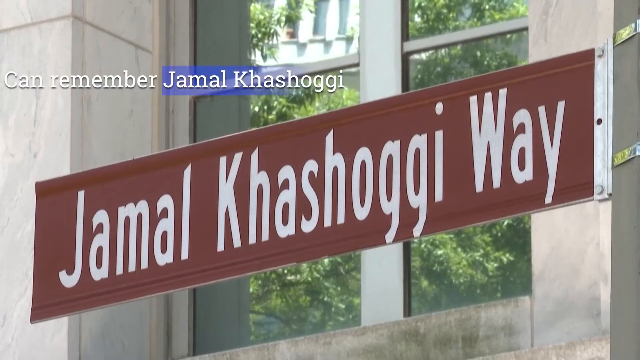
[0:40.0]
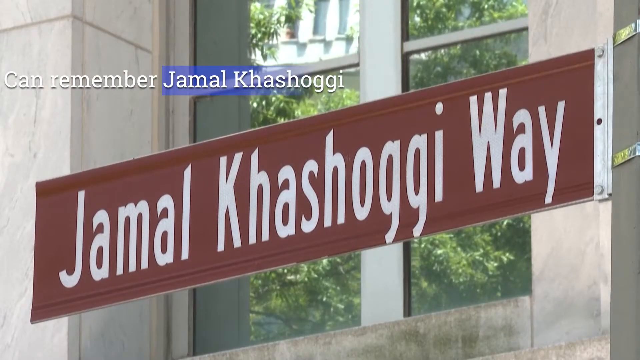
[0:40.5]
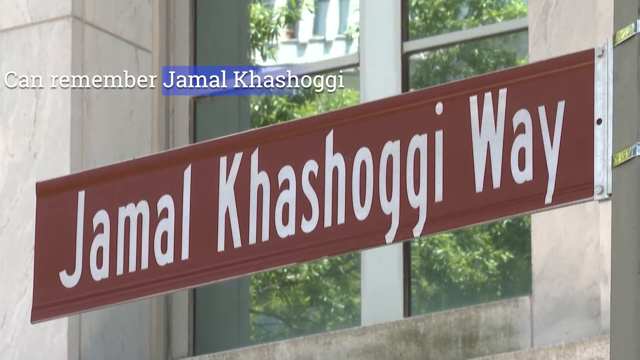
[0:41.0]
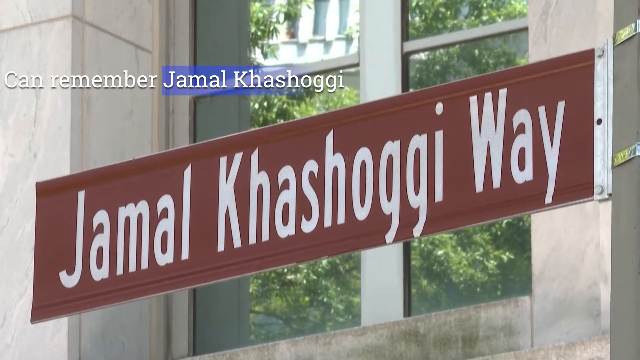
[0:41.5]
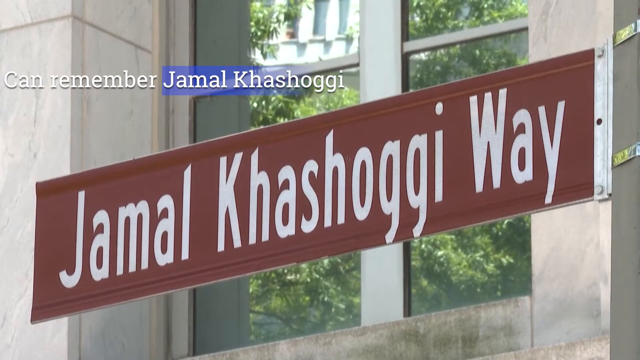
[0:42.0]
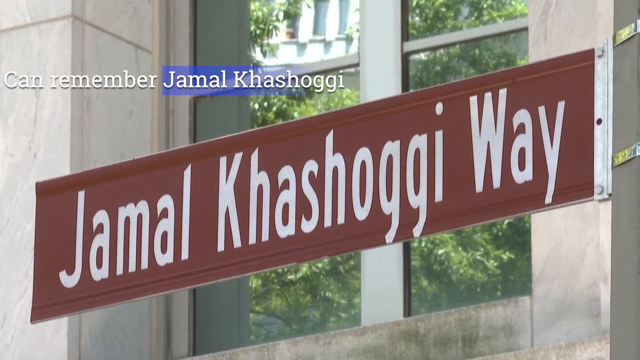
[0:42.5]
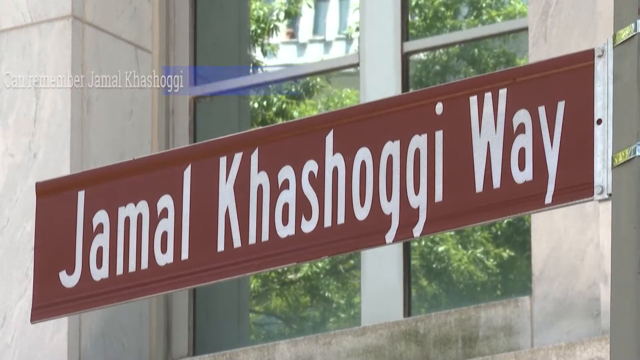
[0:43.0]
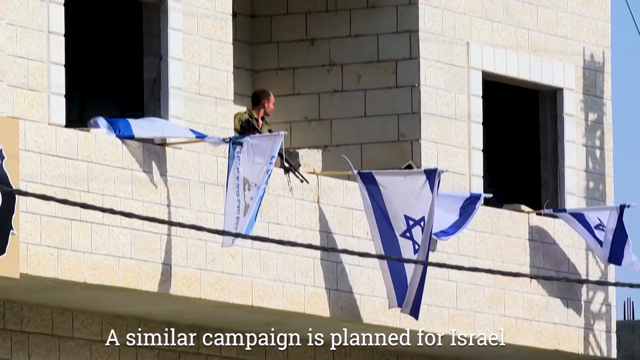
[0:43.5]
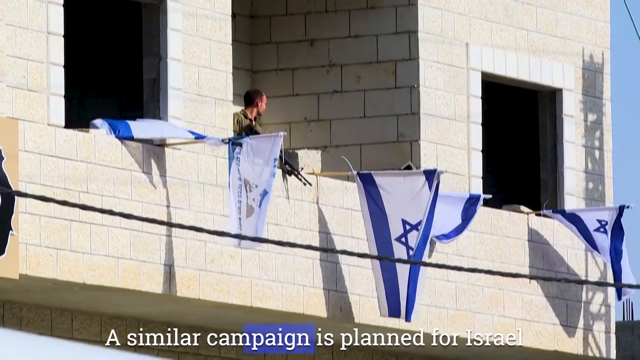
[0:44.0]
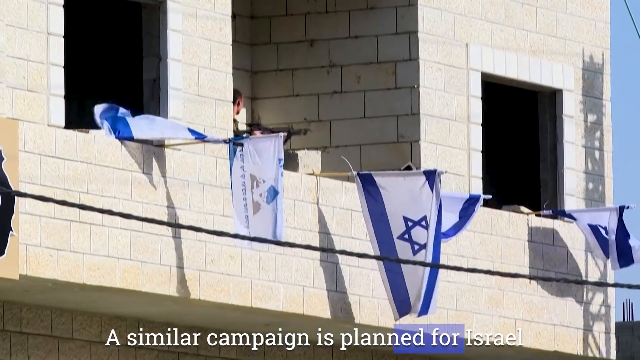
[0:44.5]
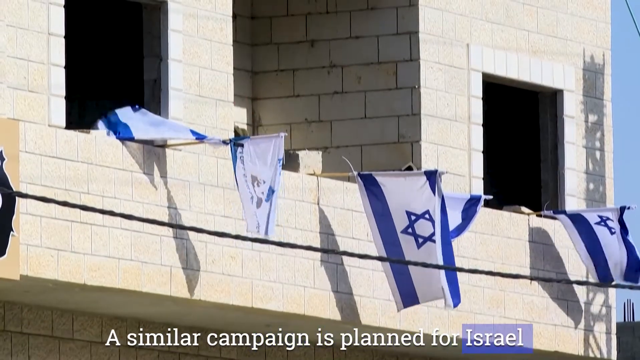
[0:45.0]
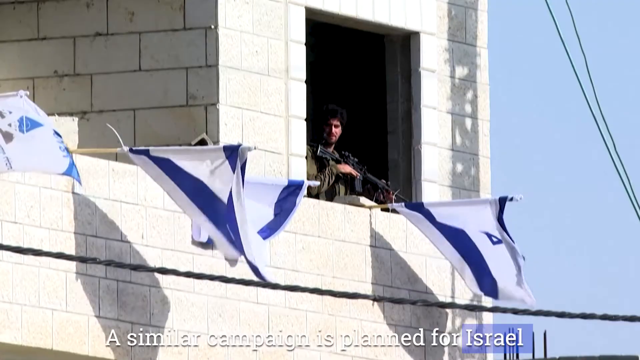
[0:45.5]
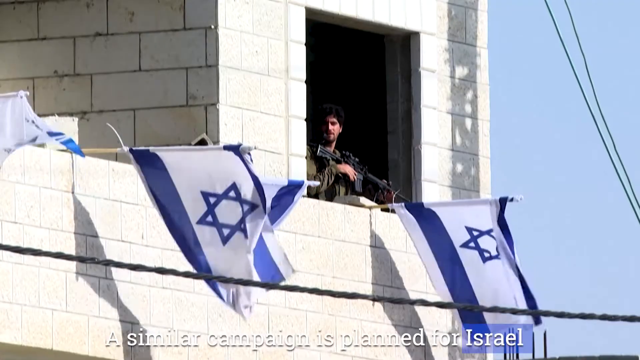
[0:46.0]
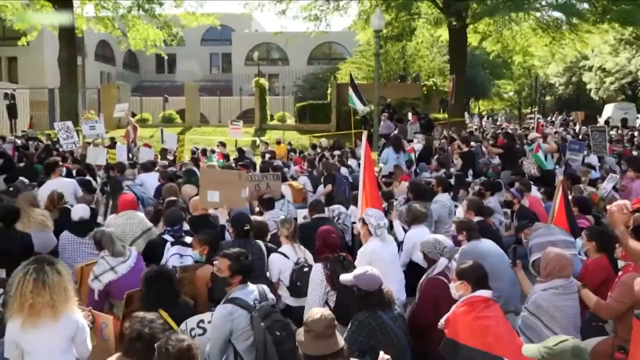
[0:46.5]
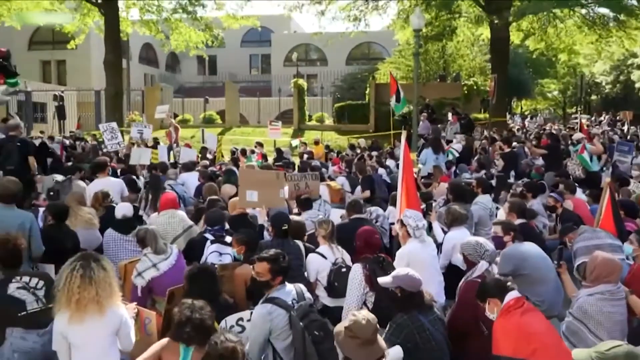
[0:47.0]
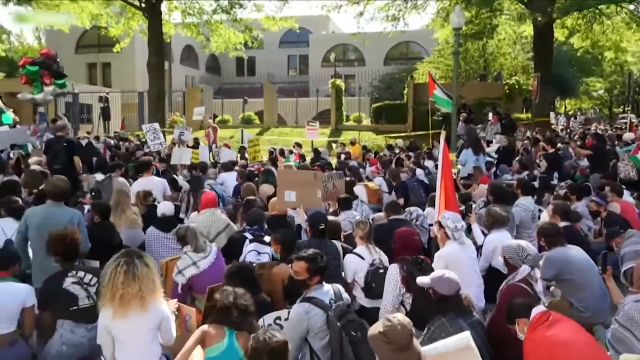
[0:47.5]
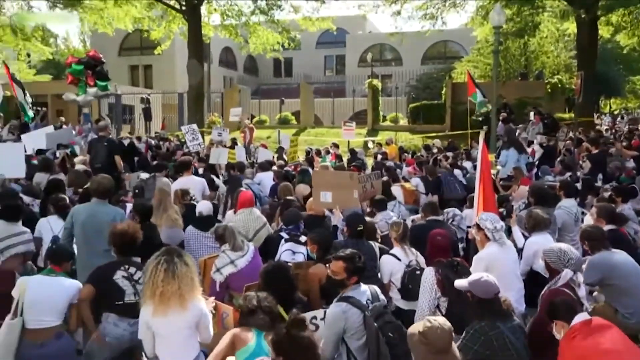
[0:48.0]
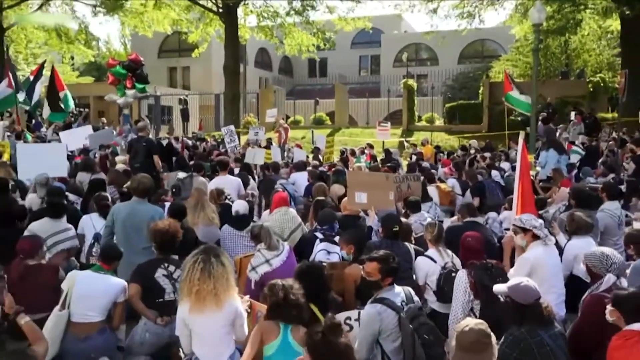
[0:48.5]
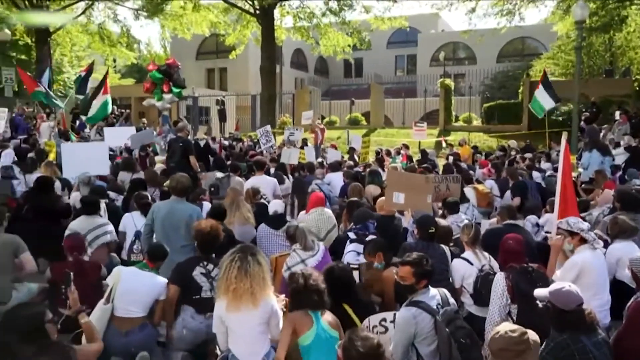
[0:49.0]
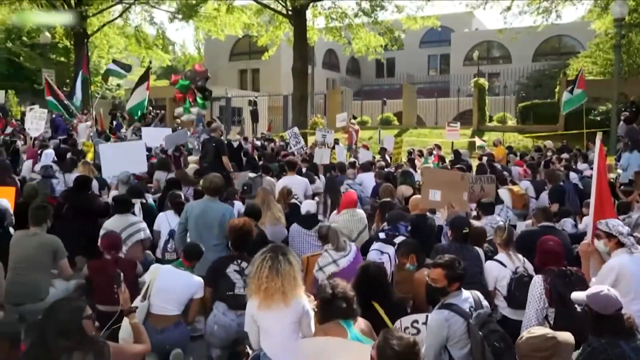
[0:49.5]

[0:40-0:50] A close-up shows a brown street sign reading "Jamal Khashoggi Way", similar to the sign seen earlier, with text mentioning "remember Jamal Khashoggi". Green trees wave in the breeze behind the sign. Then people hang from a balcony of a building holding Israeli flags, and next to the Israeli flags is a soldier holding an automatic weapon. Backing off from the building, the view shows a crowd of at least hundreds of people holding flags, dressed in colorful prints, and holding many banners.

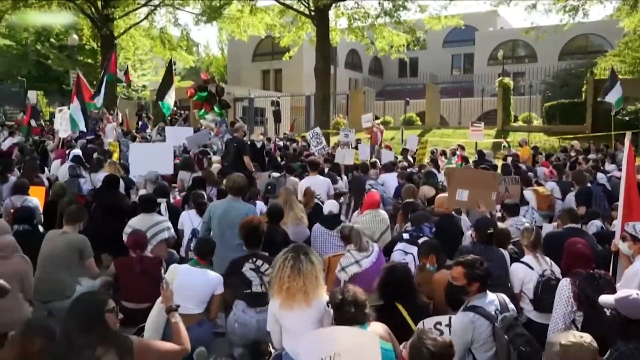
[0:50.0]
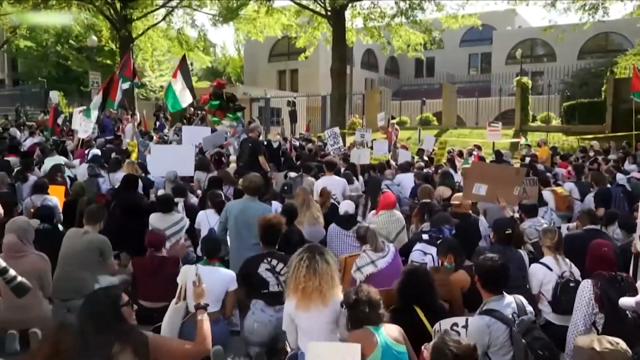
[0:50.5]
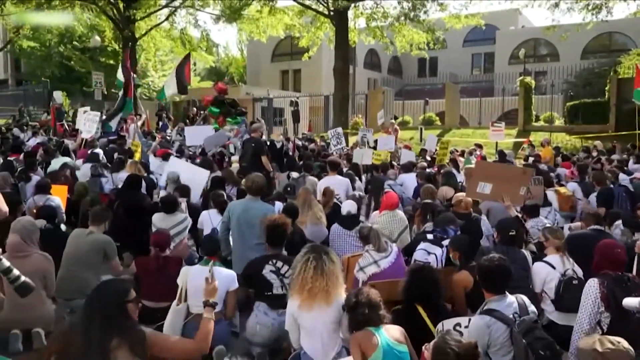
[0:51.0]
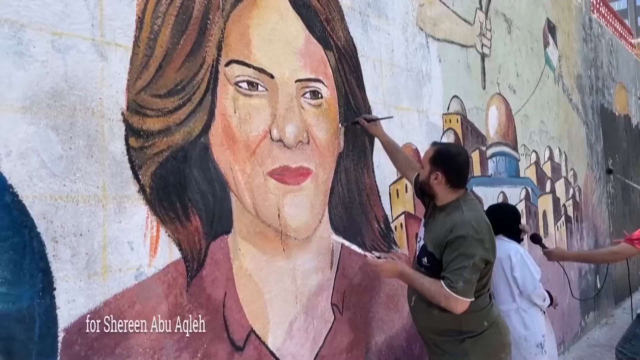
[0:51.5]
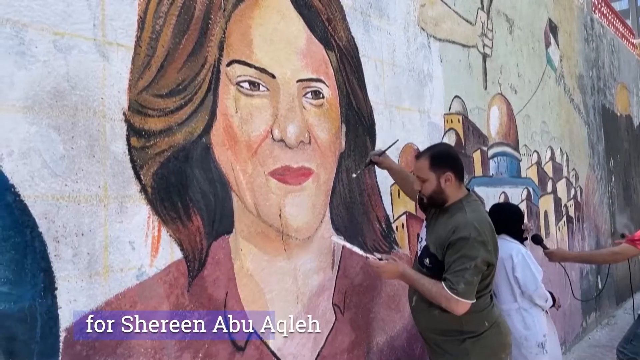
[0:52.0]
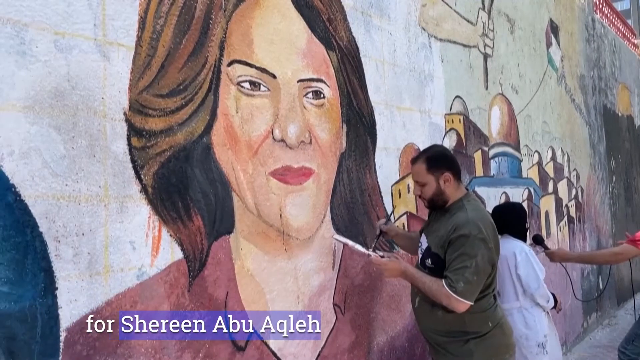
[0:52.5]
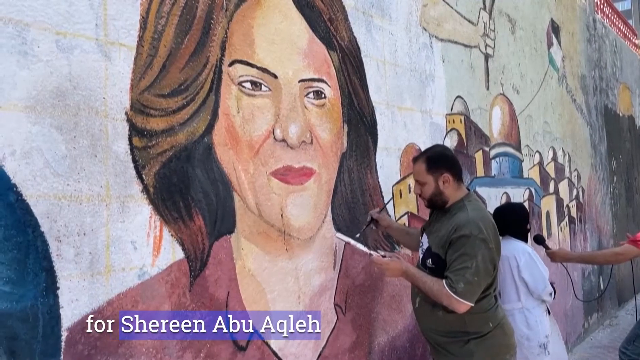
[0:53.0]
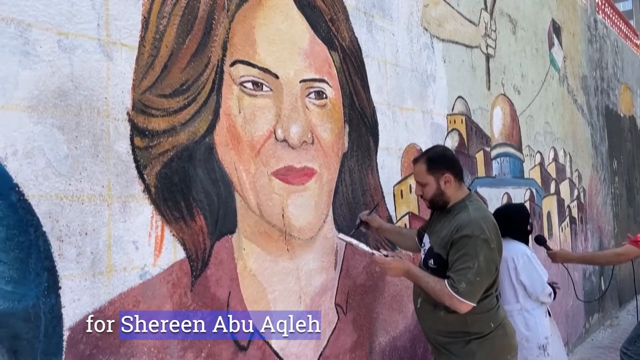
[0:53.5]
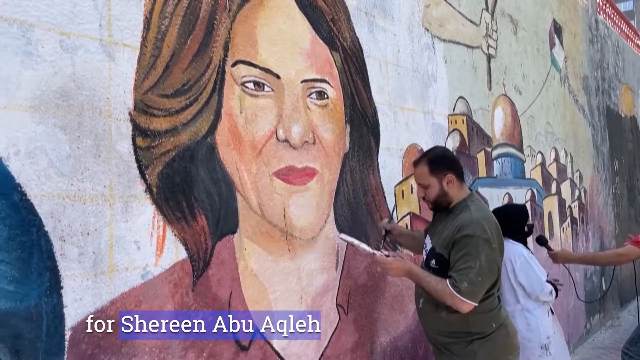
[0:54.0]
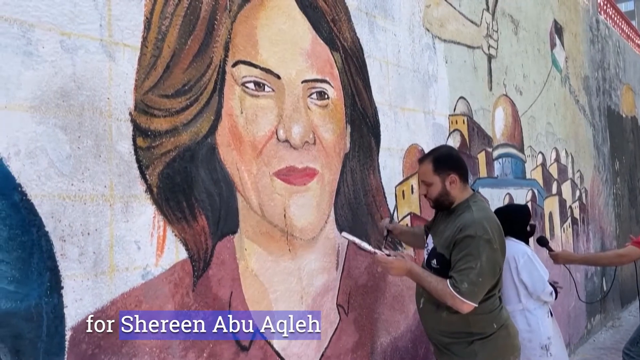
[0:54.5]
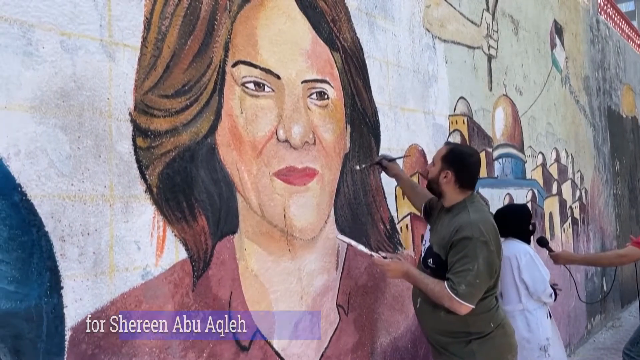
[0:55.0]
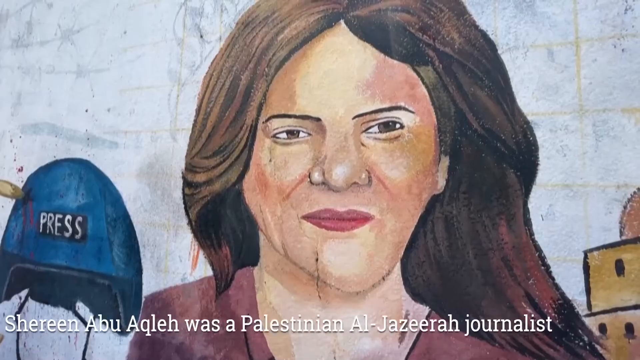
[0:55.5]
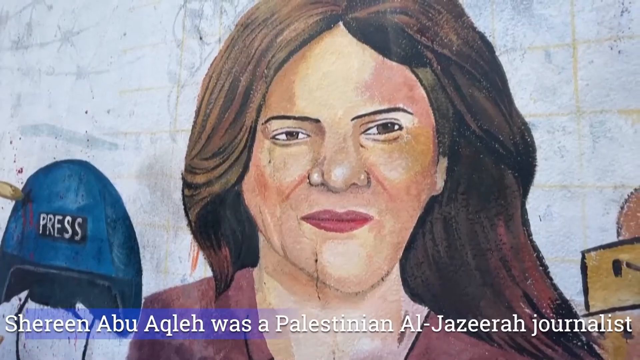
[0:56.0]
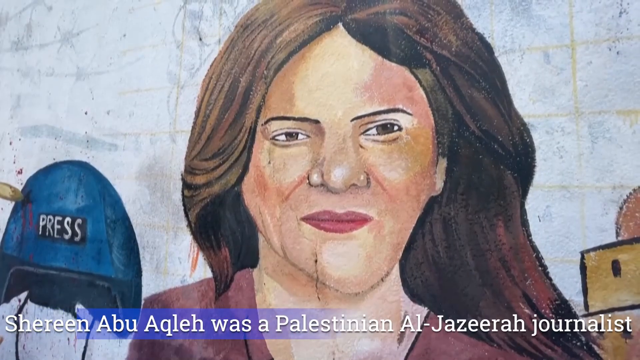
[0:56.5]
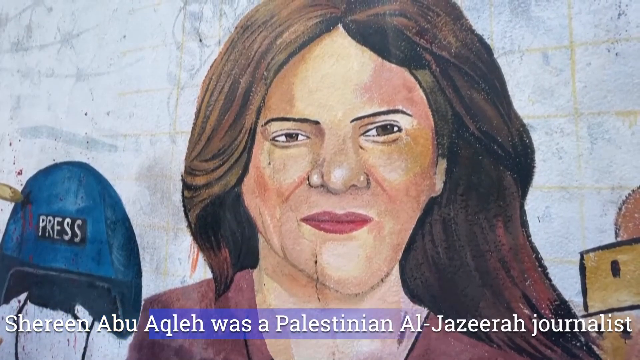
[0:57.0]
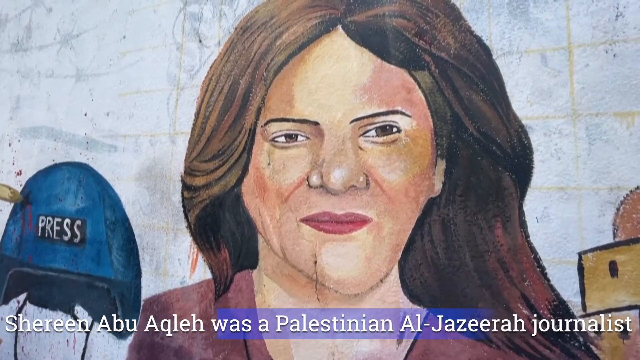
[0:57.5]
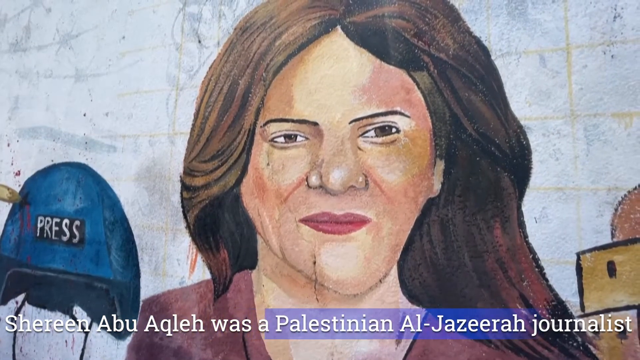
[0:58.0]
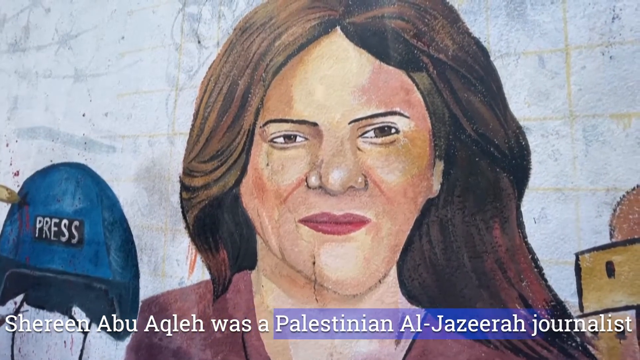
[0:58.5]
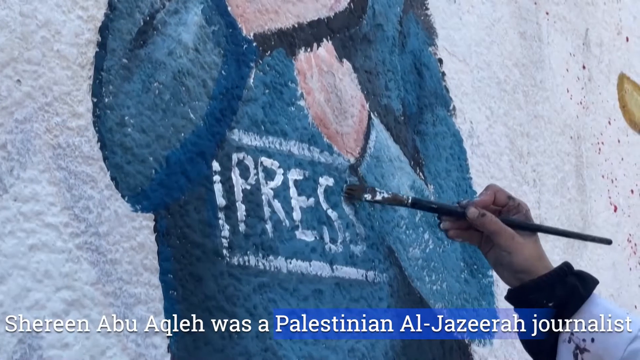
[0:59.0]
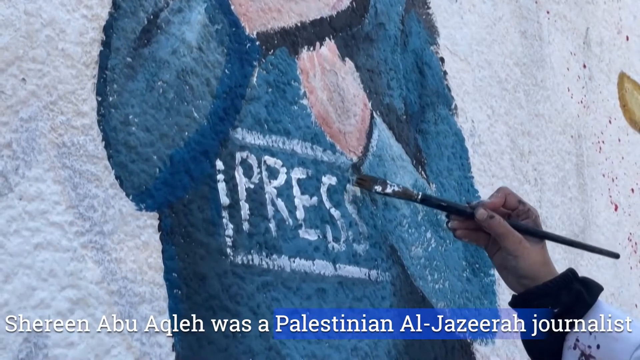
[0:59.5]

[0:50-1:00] A crowd of people protests in front of a building. A man paints a mural showing a middle-aged woman with shoulder-length brown hair, with minarets in the background, and in the far right of the picture a man being interviewed with a microphone thrust into his face. The man works on the mural, and then a front view of the mural shows, to the left of the woman as viewed, someone whose helmet says "Press".